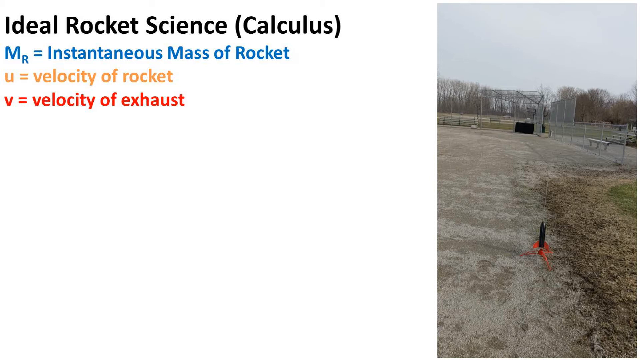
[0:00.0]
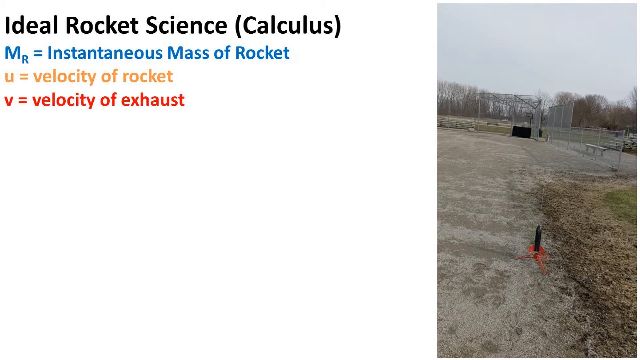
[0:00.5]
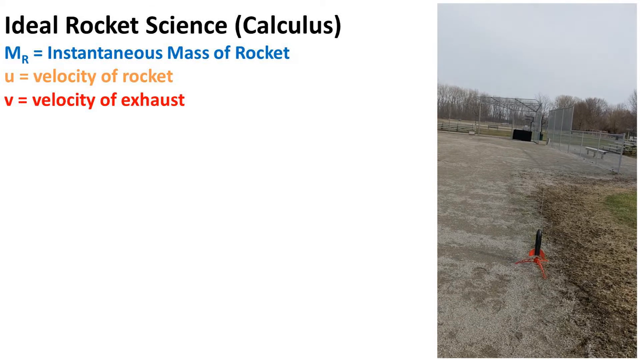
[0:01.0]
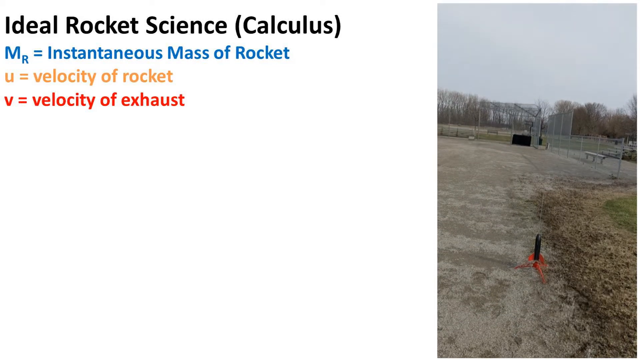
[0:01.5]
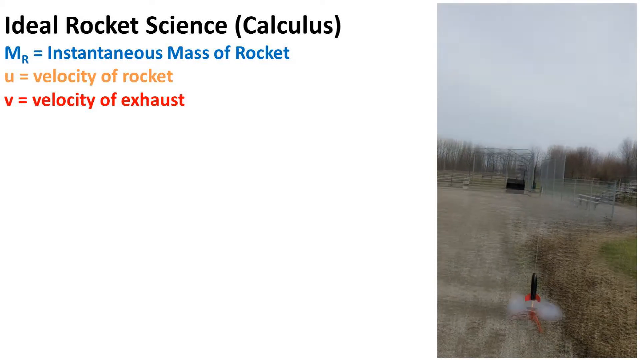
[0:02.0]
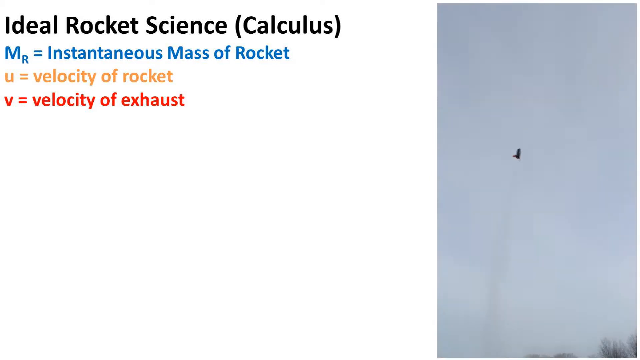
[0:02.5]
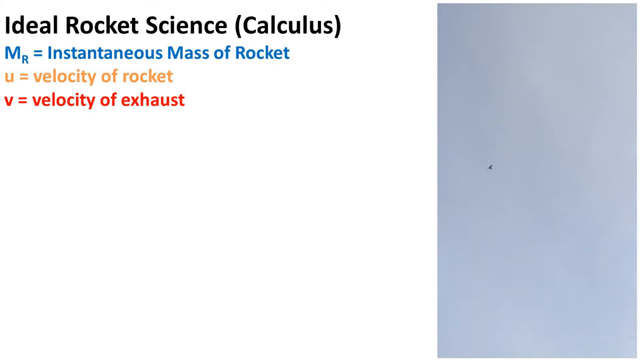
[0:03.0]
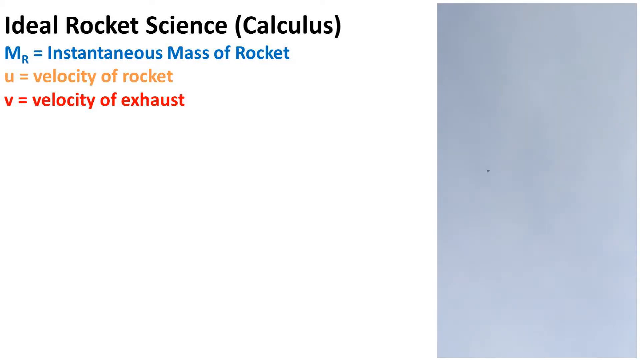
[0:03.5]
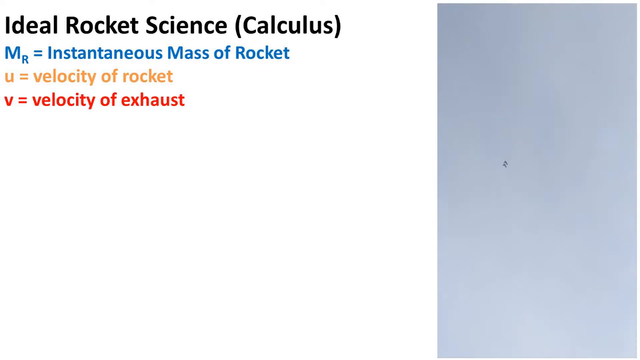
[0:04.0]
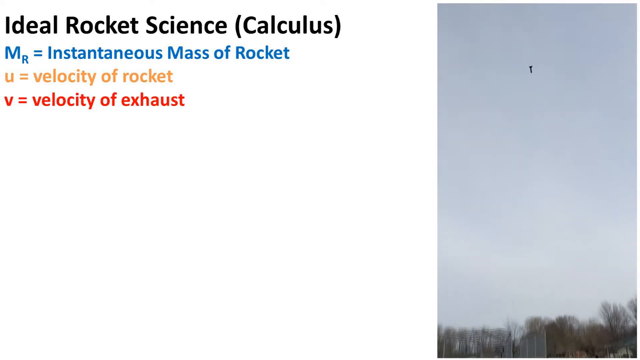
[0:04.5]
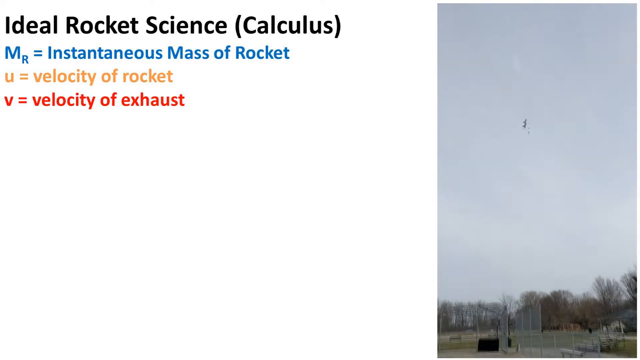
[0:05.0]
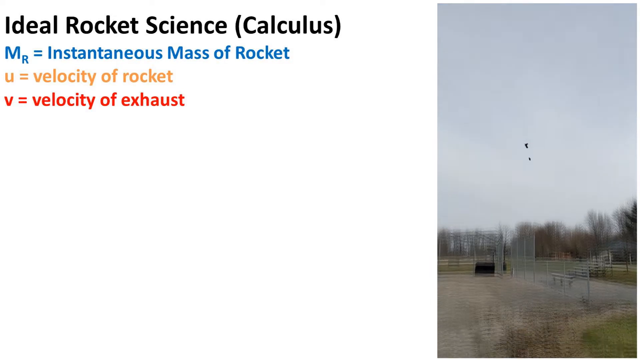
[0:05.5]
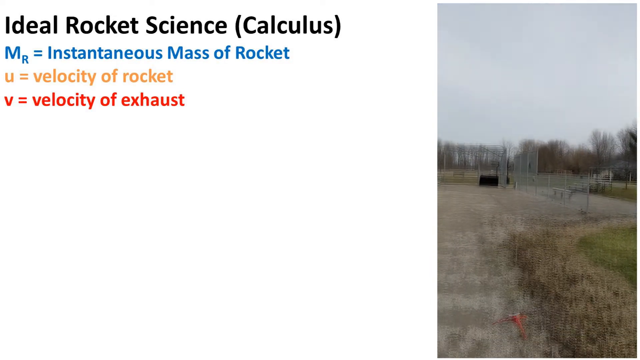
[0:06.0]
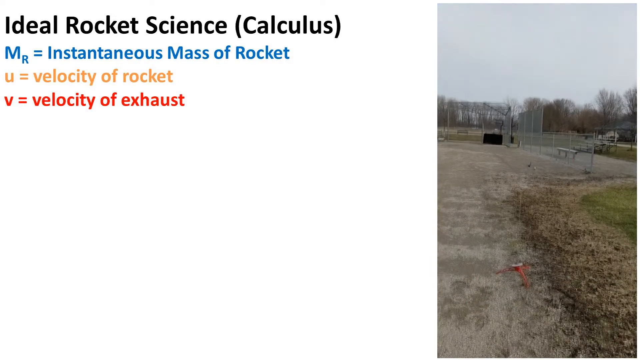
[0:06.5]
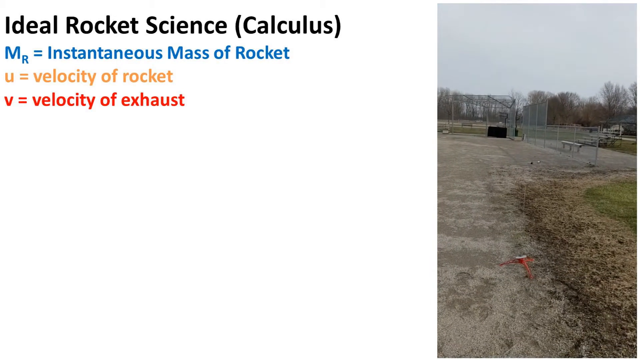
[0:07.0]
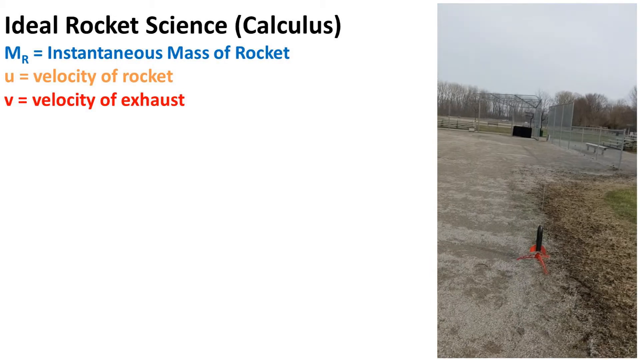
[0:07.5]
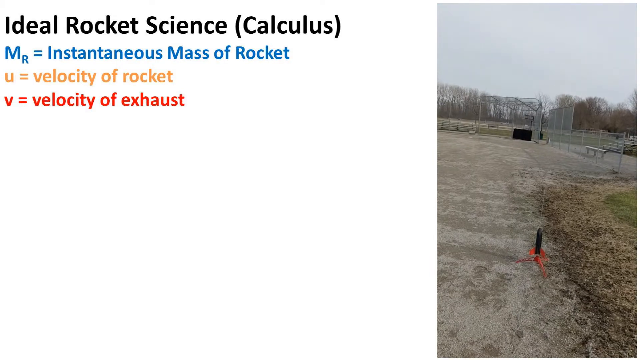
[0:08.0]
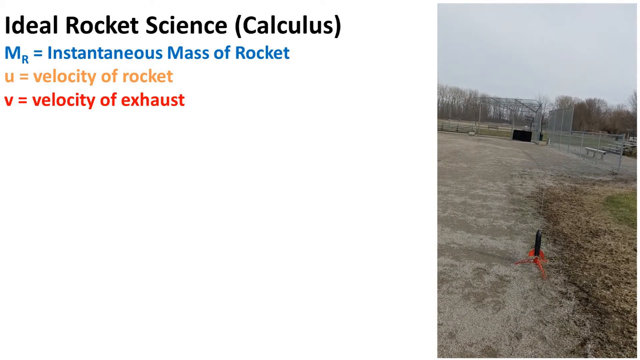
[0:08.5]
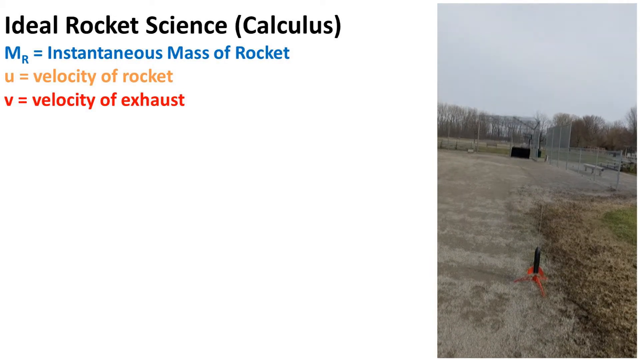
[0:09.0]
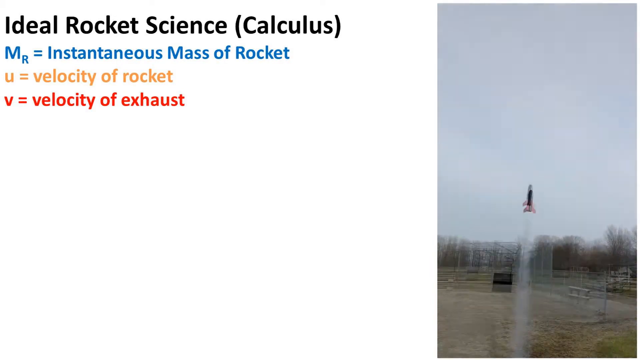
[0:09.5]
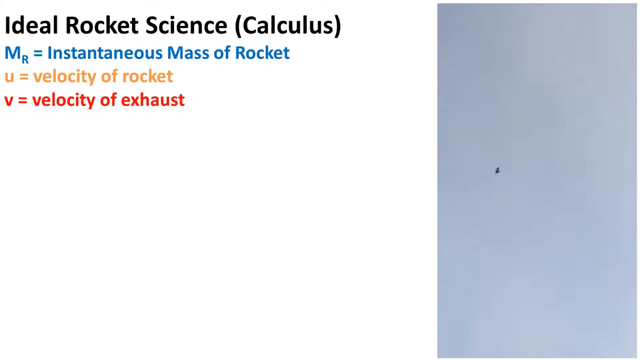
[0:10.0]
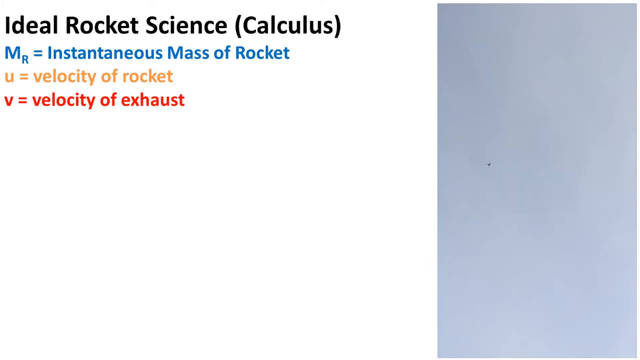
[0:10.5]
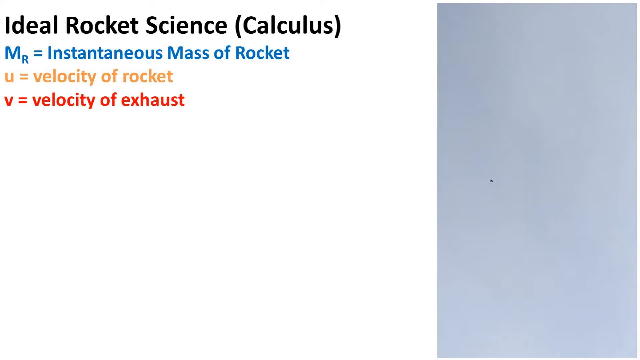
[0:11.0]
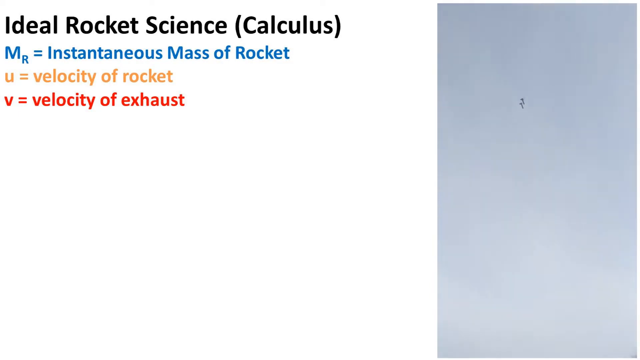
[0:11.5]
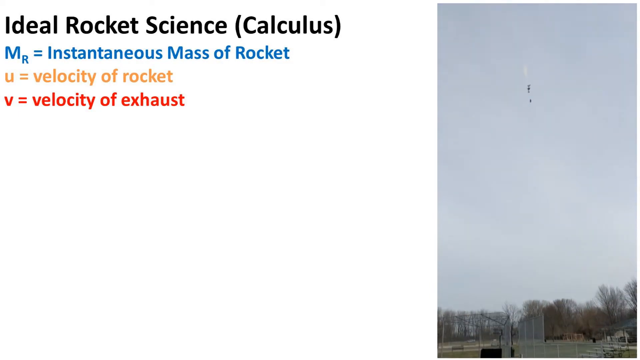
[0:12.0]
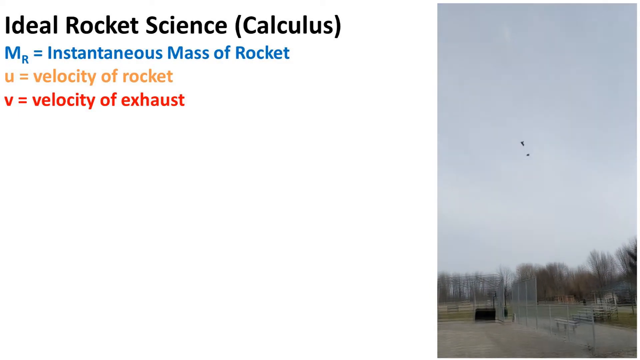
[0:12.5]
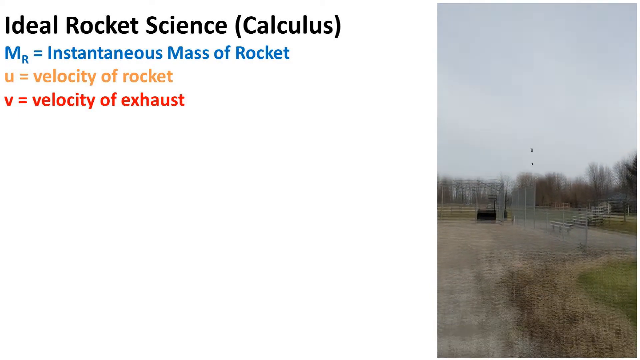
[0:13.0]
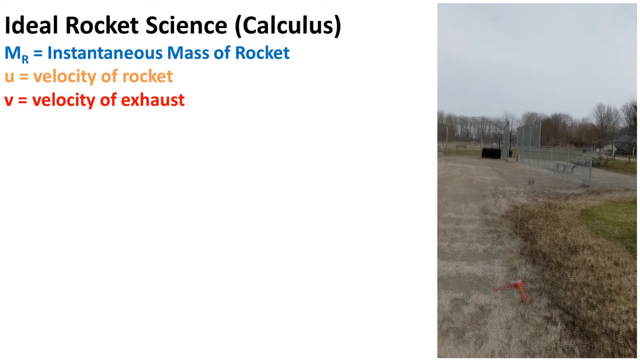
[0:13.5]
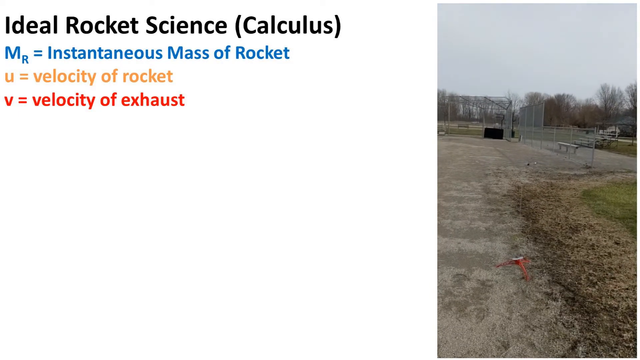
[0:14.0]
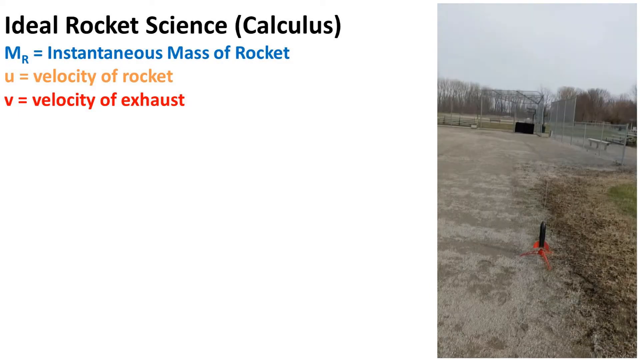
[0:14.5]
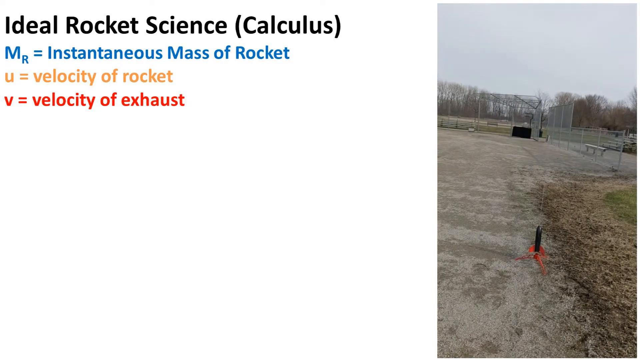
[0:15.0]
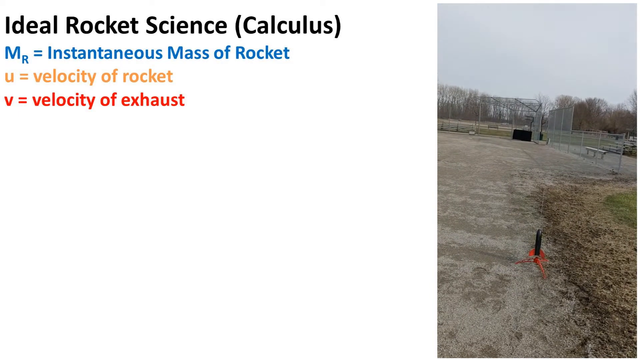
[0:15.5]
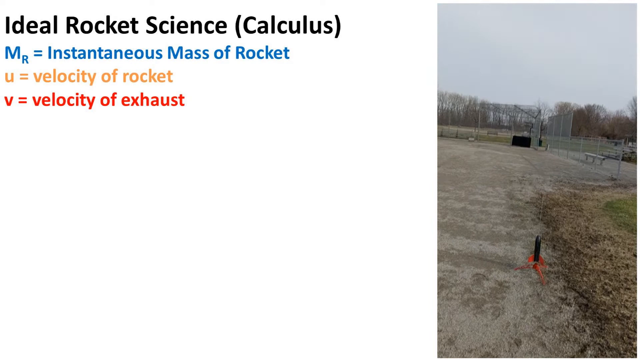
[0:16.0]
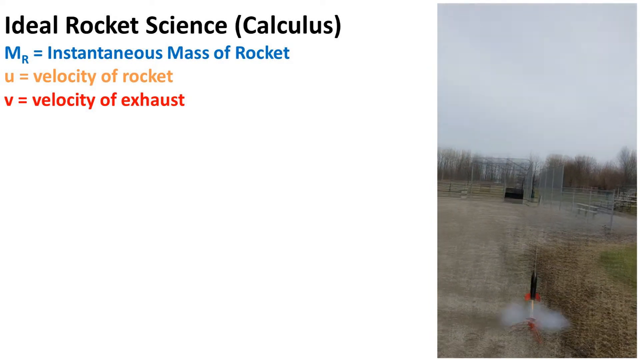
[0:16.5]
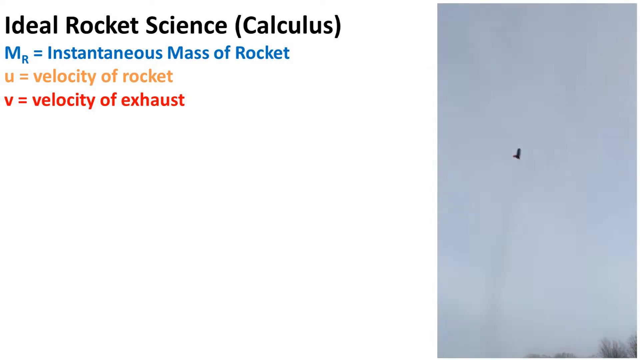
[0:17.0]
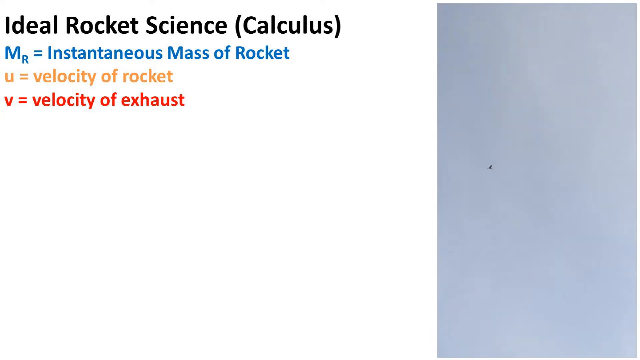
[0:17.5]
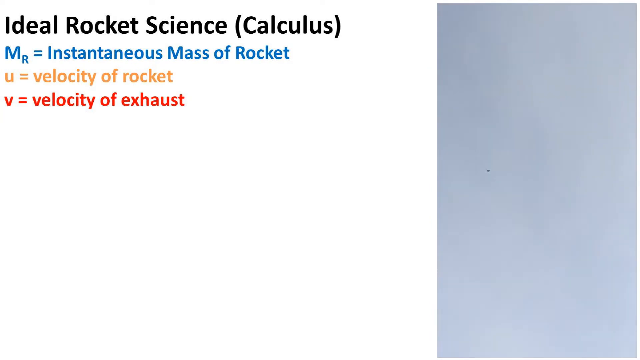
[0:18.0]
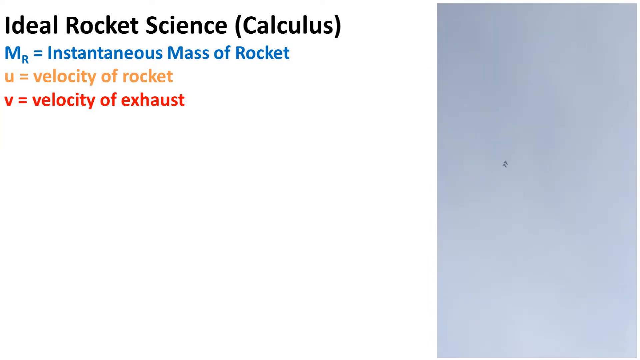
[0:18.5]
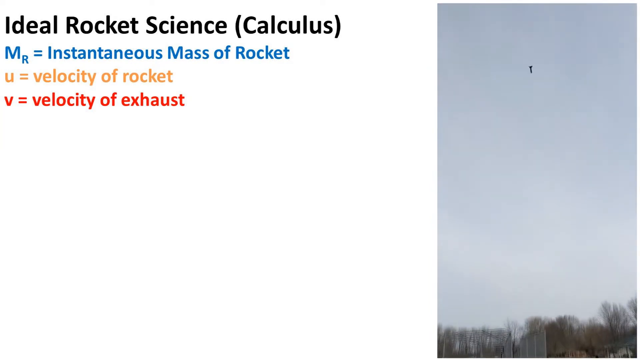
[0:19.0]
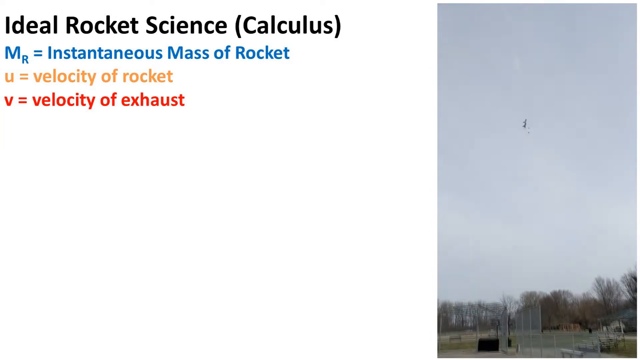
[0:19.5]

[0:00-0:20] The frame is split: on the right is a patched-in video, and on the left is a white background with four instances of text. The video on the right is a looping clip of a small rocket launching into the air and landing back down. The four pieces of text are in the top-left portion of the screen. The first, in the largest size and a black font, reads "Ideal Rocket Science (Calculus)". Below it, in blue, is an m with a small r as a denotation, equal to "Instantaneous Mass of Rocket". Below that, in yellow, is "u = Velocity of Rocket". The final line, in red, is "v = Velocity of Exhaust". There is no other text or object on the white left side.